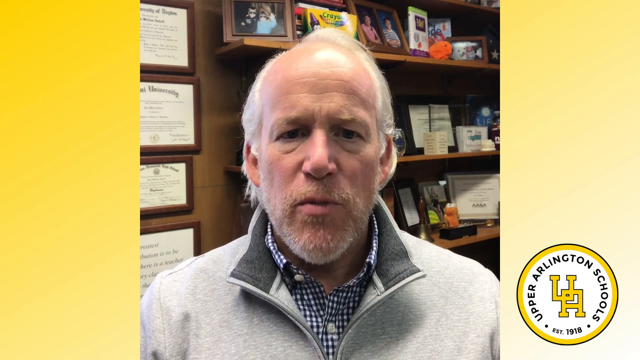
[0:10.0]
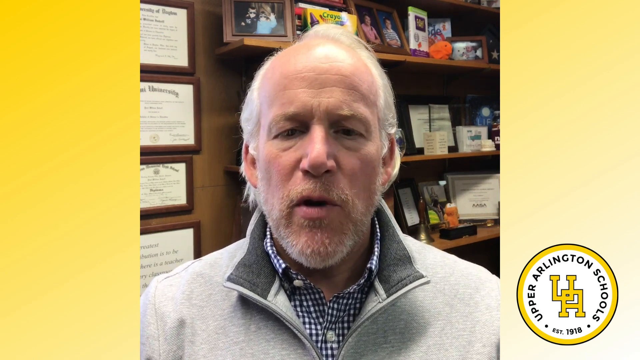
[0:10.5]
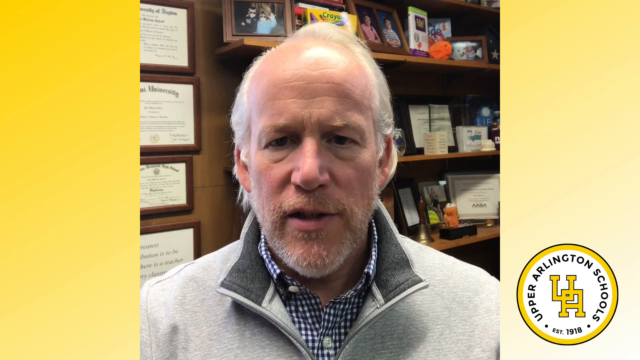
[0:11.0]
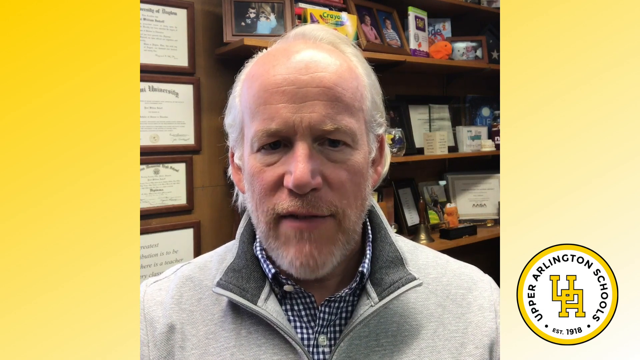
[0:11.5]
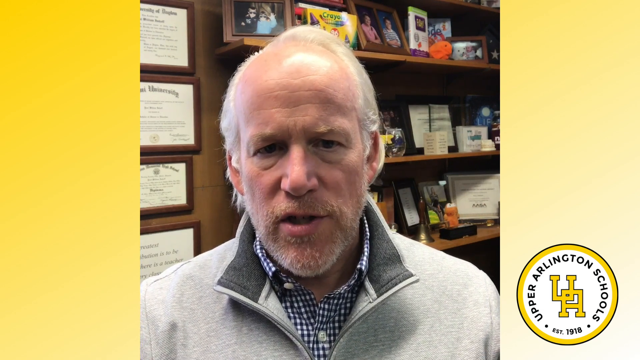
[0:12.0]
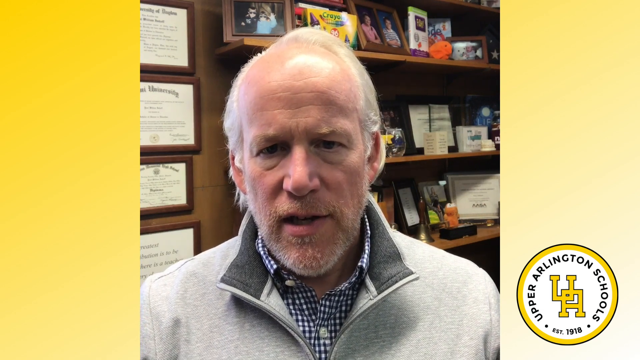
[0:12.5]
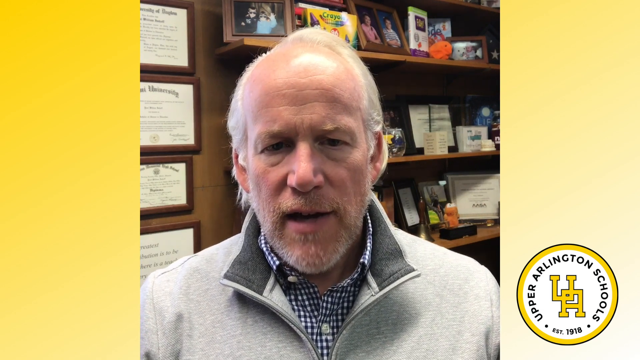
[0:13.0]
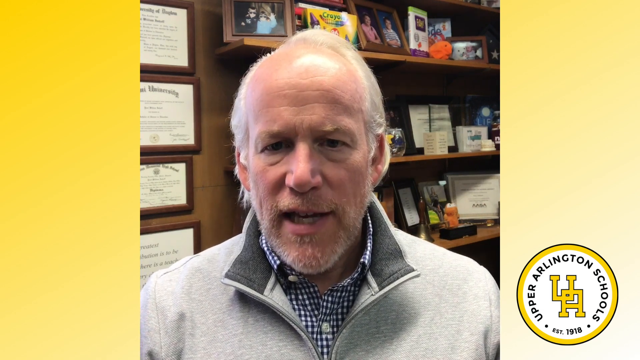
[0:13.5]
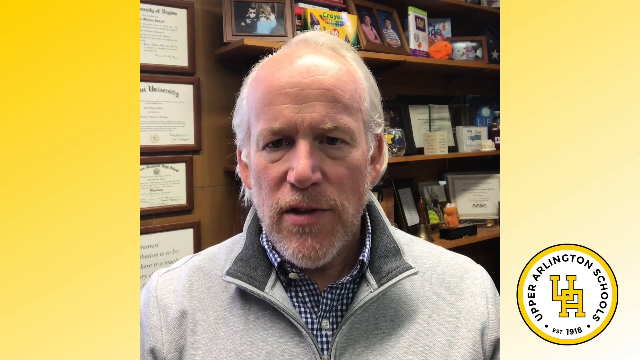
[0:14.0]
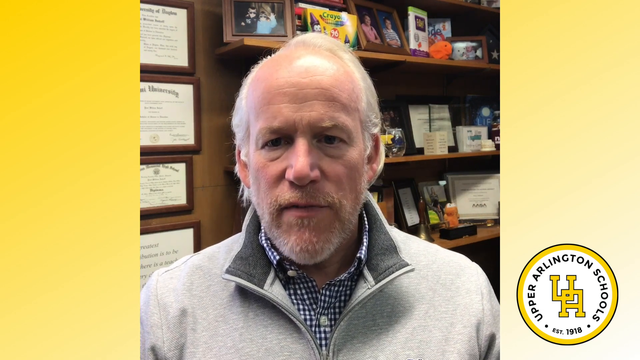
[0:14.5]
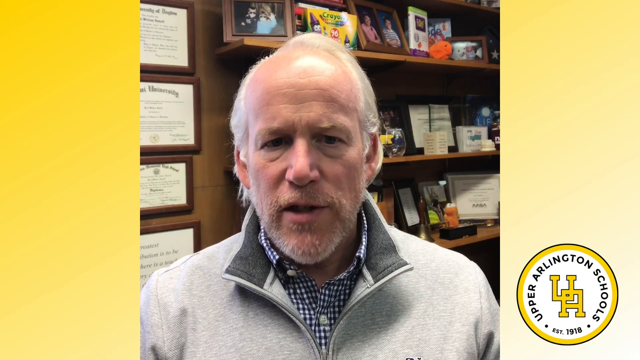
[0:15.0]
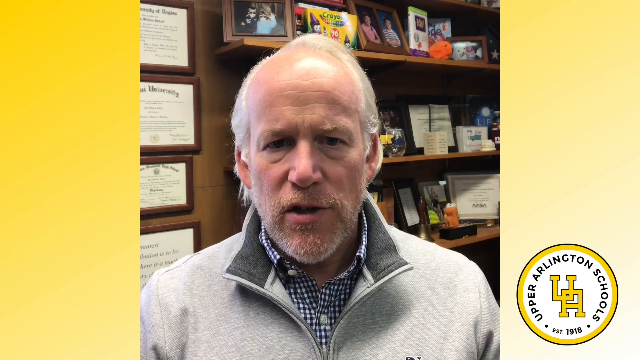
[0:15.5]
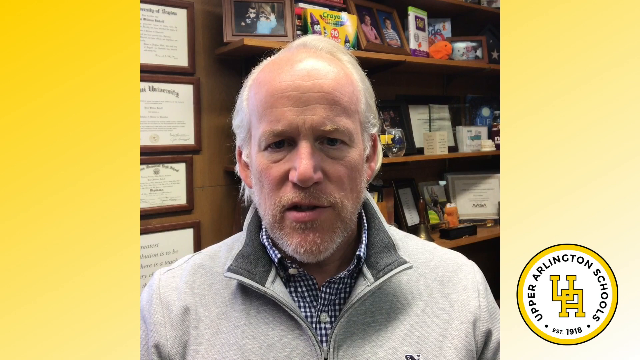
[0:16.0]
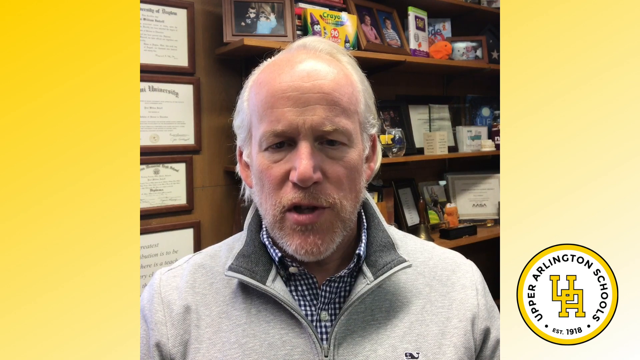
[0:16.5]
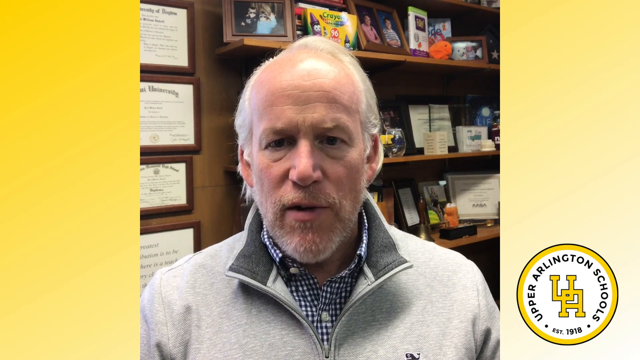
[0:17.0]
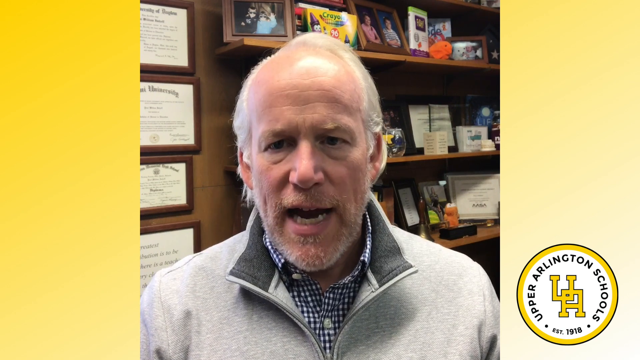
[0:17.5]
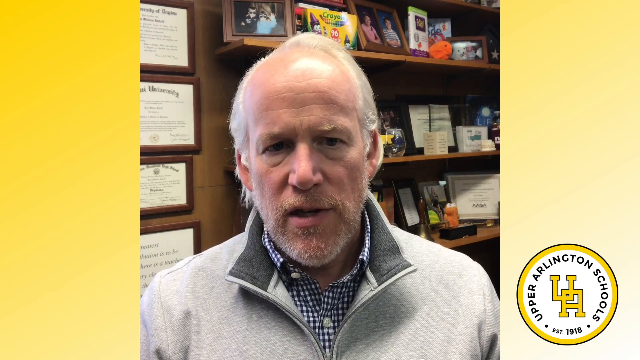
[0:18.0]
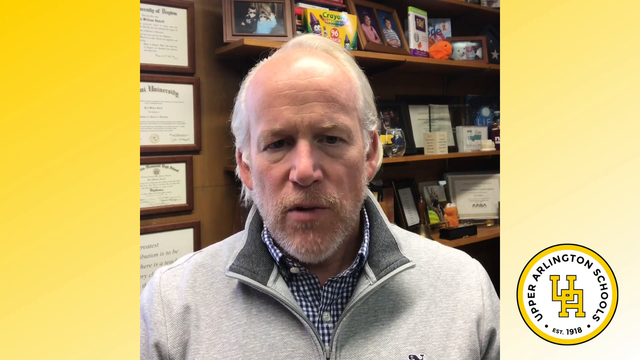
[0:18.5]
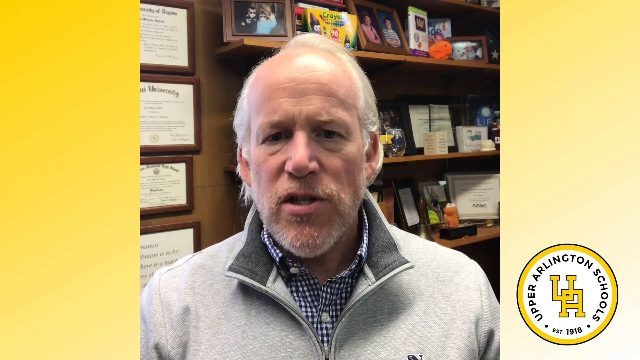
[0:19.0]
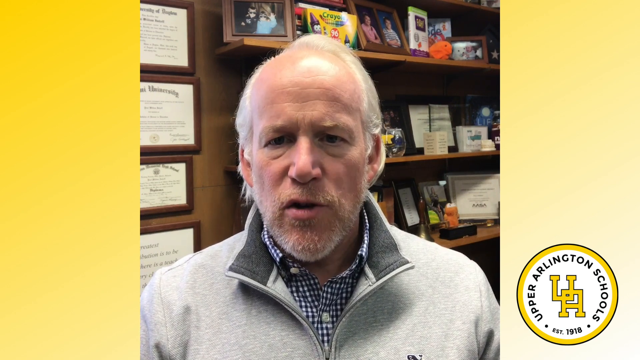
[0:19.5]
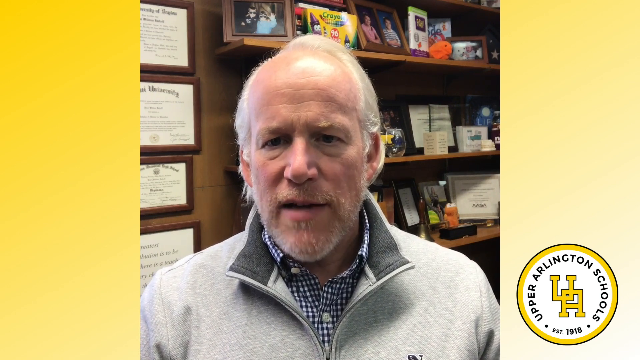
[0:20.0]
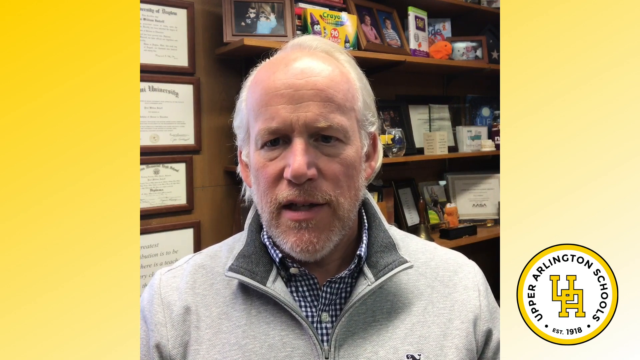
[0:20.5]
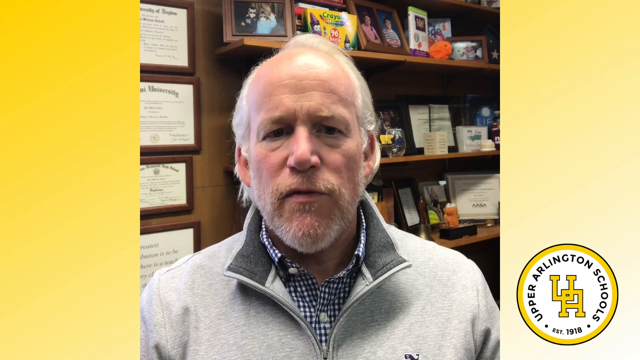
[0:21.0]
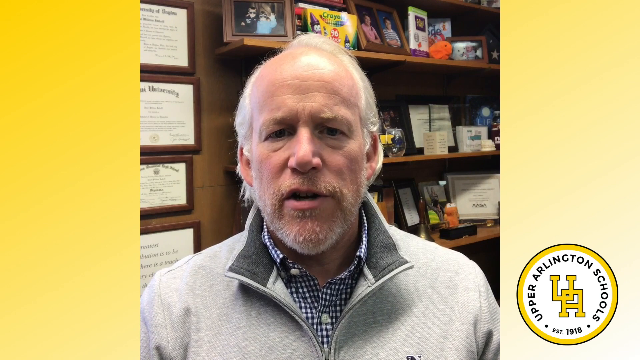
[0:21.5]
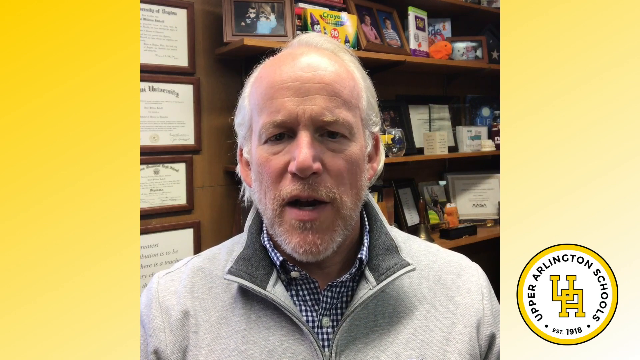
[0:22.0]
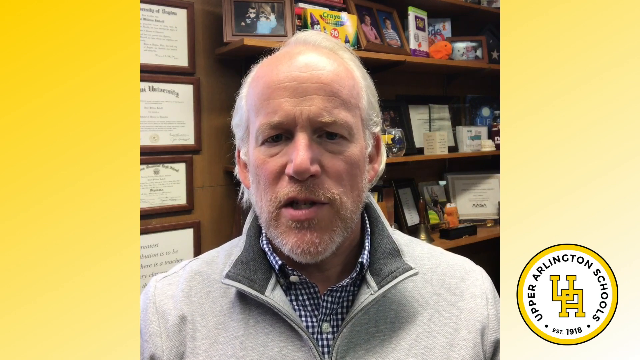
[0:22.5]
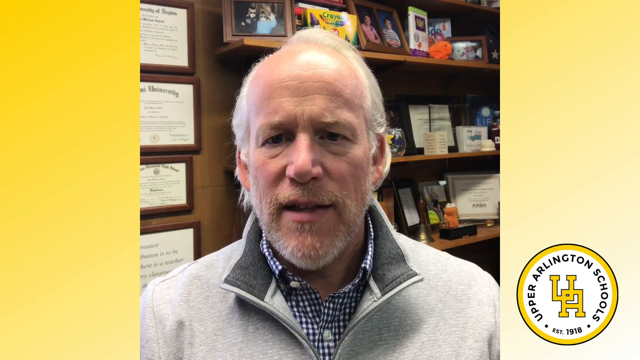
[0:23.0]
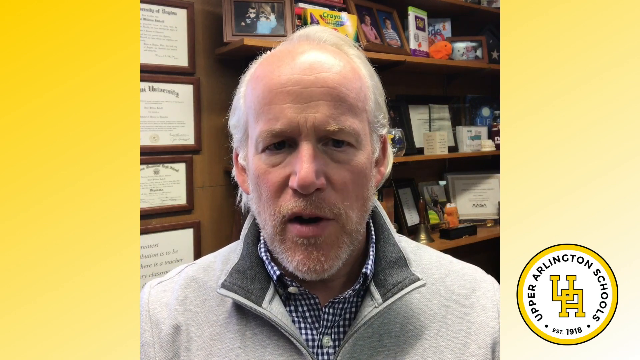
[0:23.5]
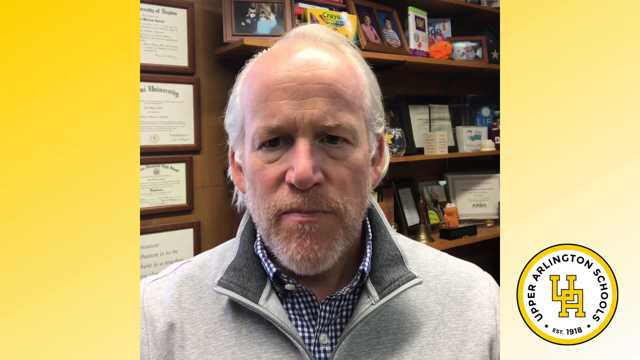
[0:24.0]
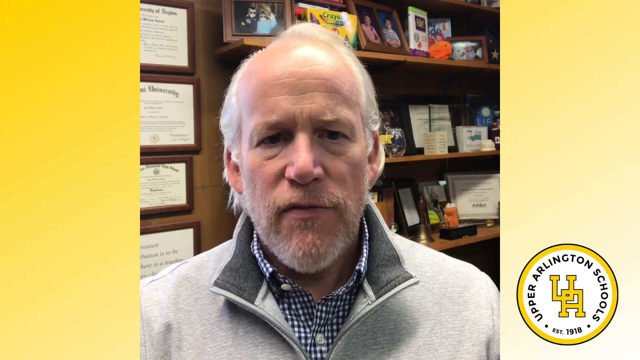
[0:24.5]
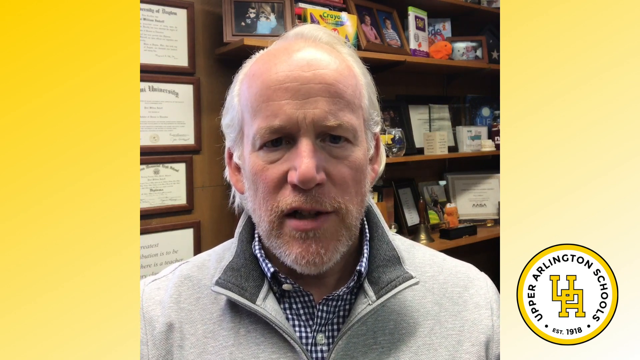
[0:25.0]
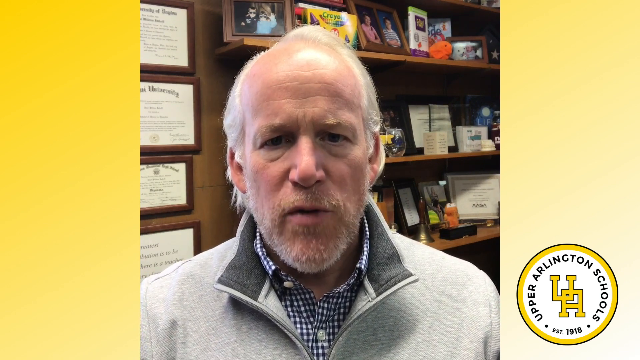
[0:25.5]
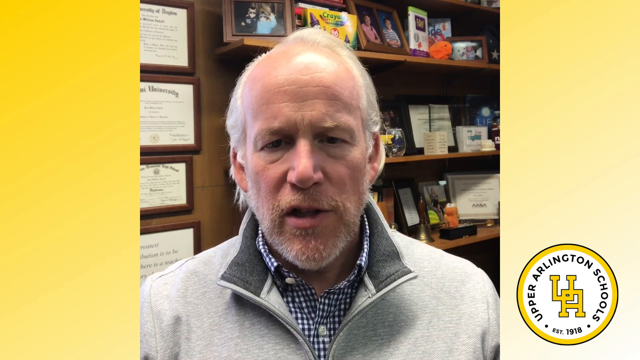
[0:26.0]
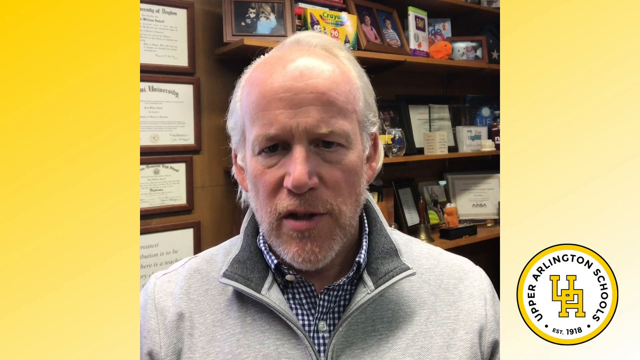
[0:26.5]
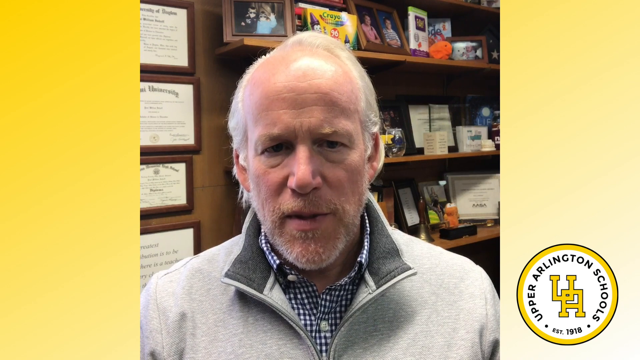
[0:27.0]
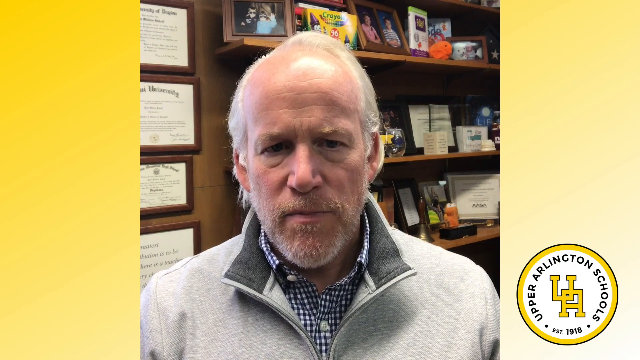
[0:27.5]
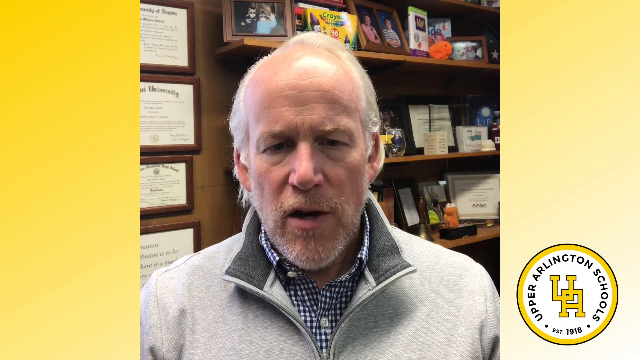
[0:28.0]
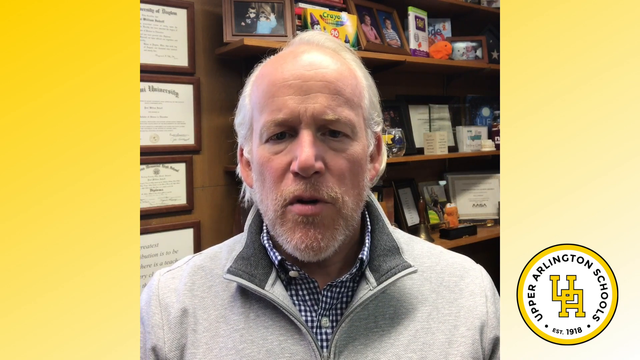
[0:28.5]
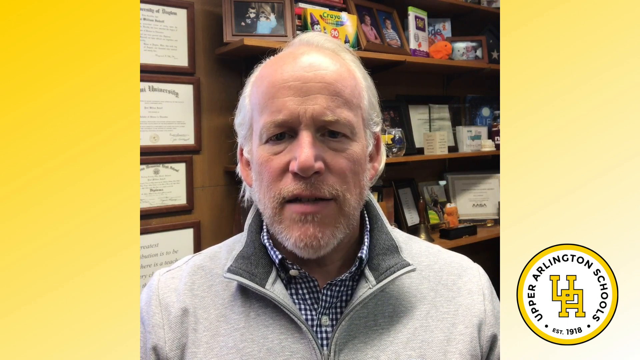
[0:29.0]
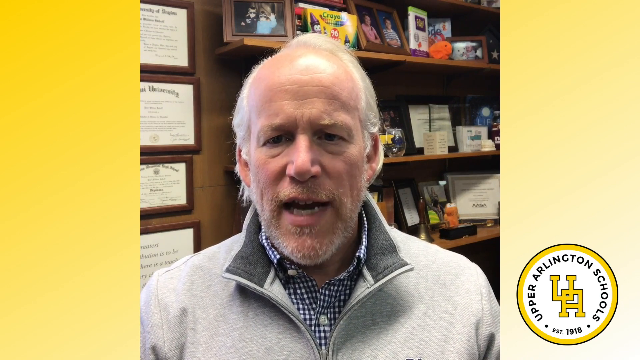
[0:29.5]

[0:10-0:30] The older man is on screen, with a shelf in the background full of pictures and what look like awards. Toward the left of the shelf are what appear to be educational diplomas and certificates. In the bottom right corner of the video is the Upper Arlington Schools logo: a circle with a black ring and a thicker yellow ring, reading "Upper Arlington Schools" with a yellow U and a yellow A and "EST 1918." The man wears a gray jersey and a checkered shirt and continues talking to the camera.